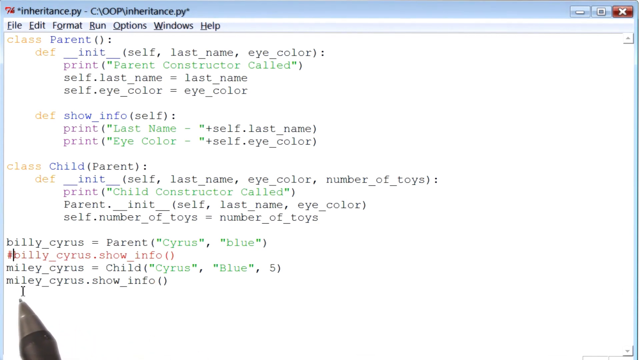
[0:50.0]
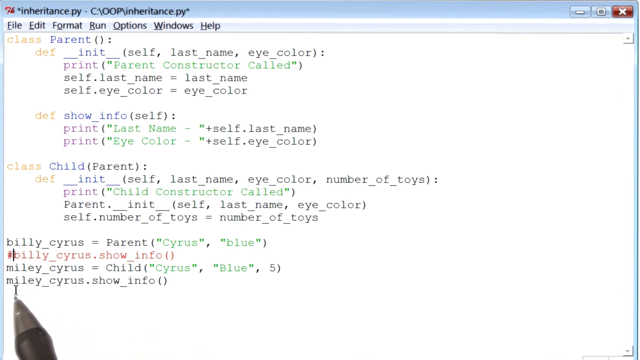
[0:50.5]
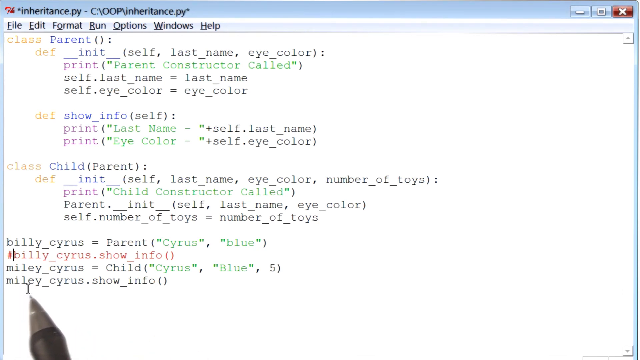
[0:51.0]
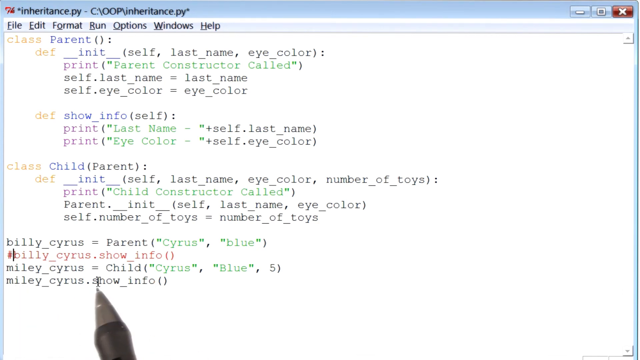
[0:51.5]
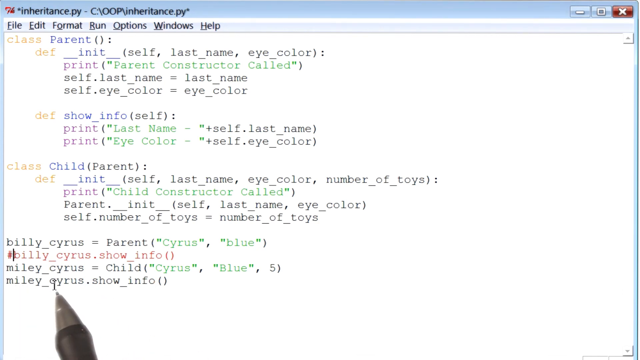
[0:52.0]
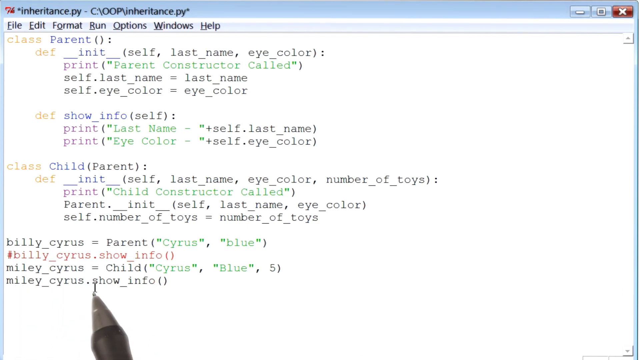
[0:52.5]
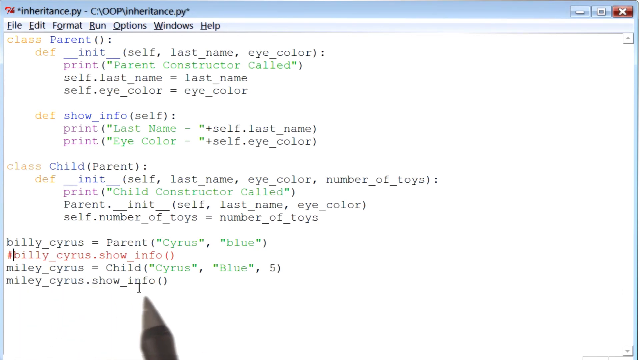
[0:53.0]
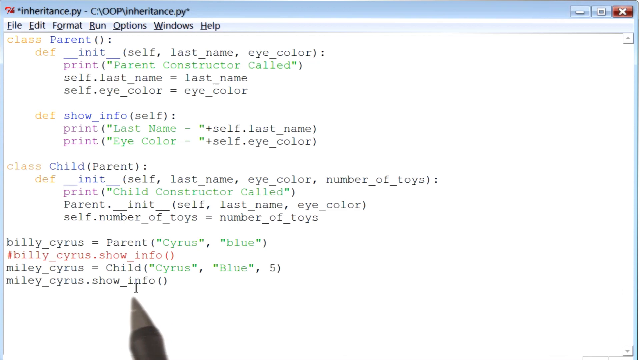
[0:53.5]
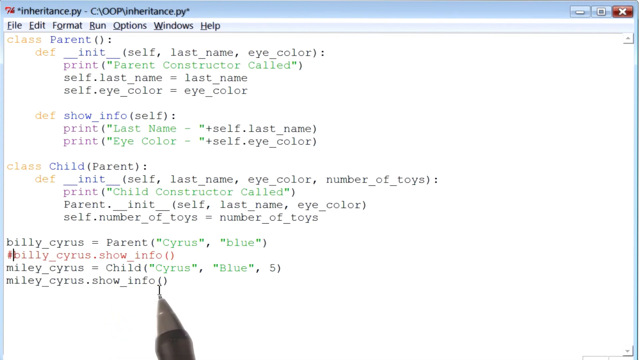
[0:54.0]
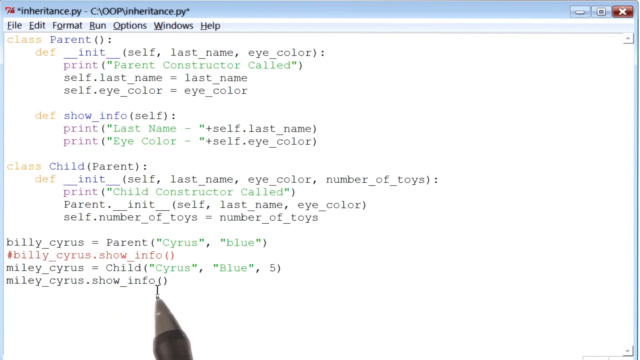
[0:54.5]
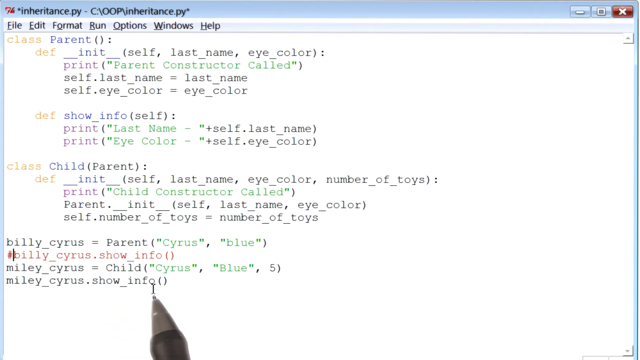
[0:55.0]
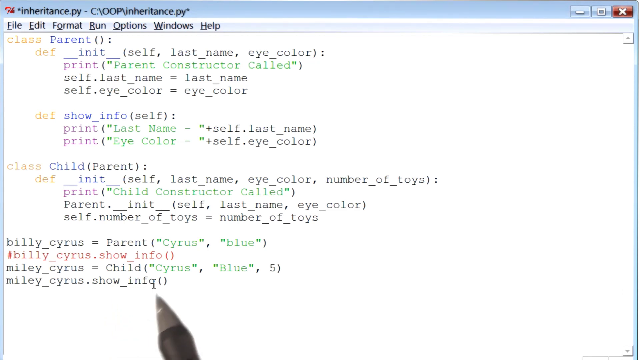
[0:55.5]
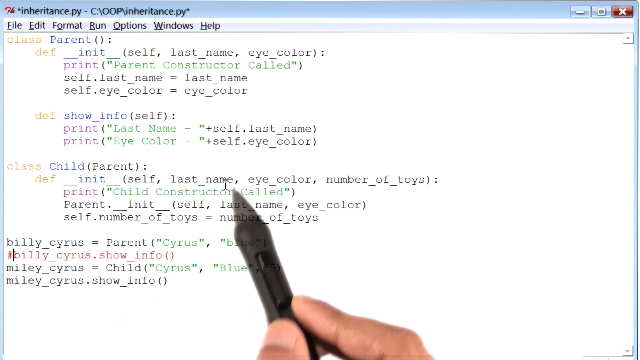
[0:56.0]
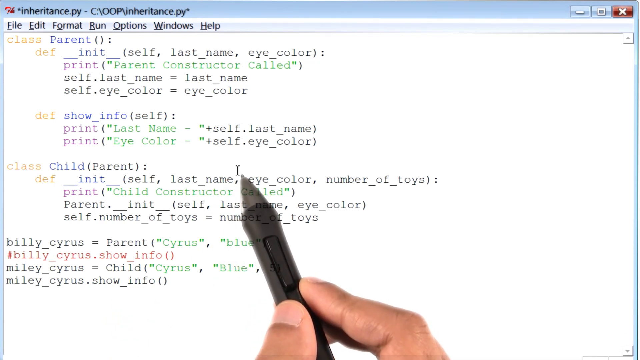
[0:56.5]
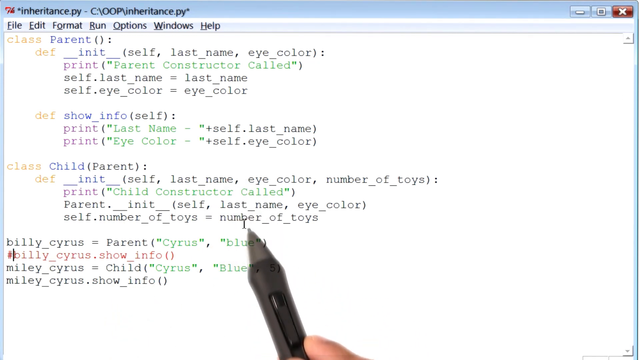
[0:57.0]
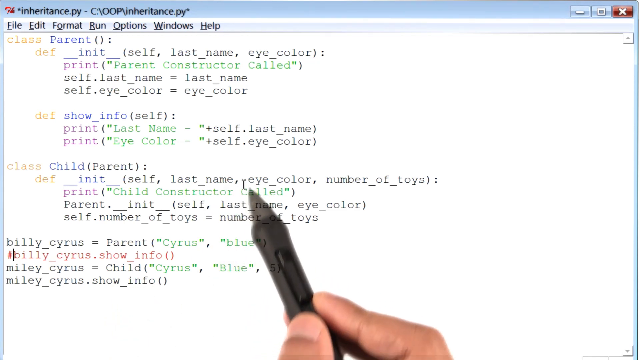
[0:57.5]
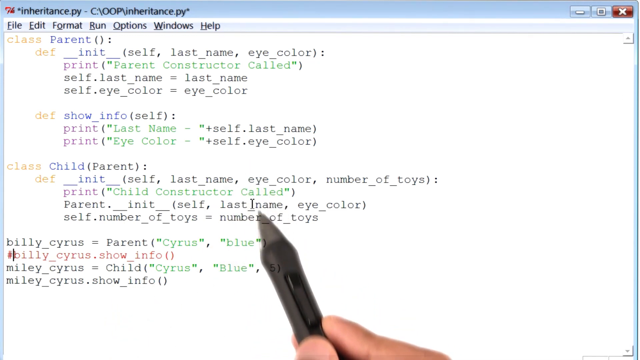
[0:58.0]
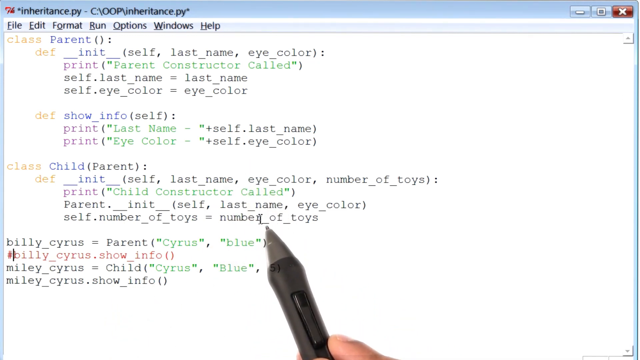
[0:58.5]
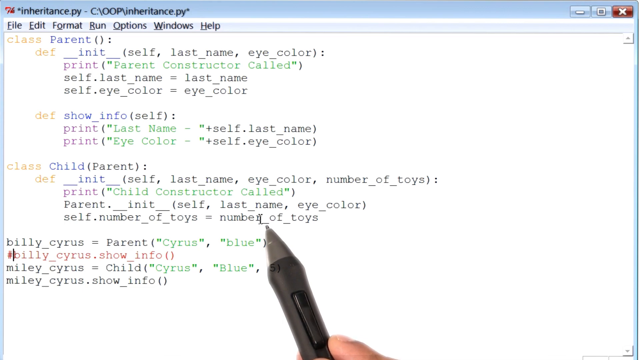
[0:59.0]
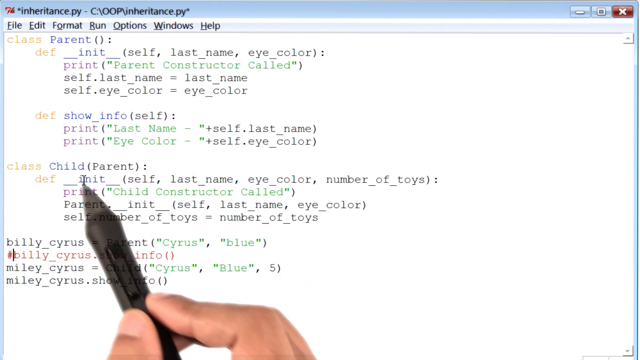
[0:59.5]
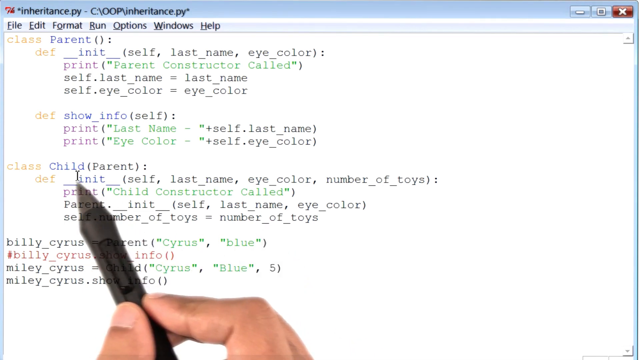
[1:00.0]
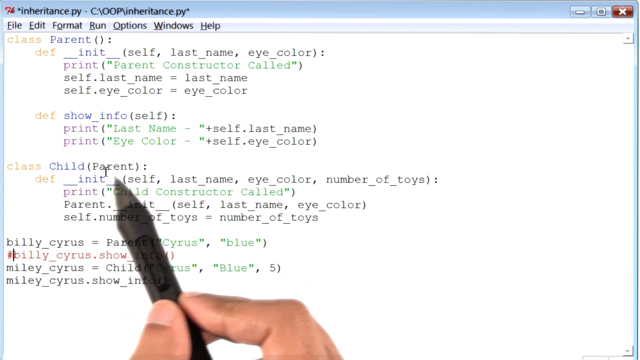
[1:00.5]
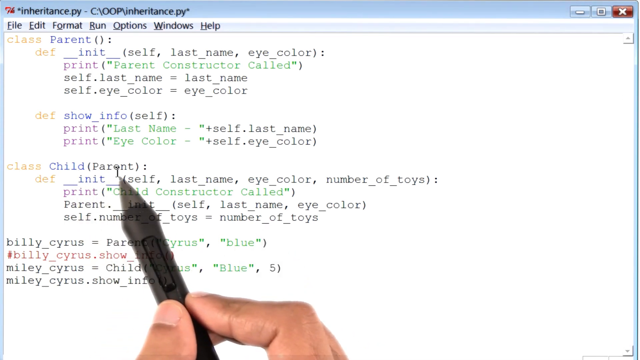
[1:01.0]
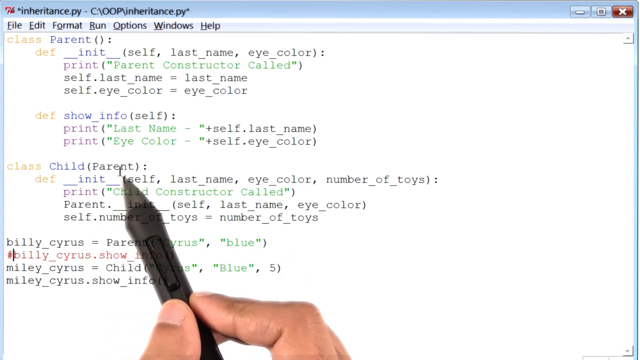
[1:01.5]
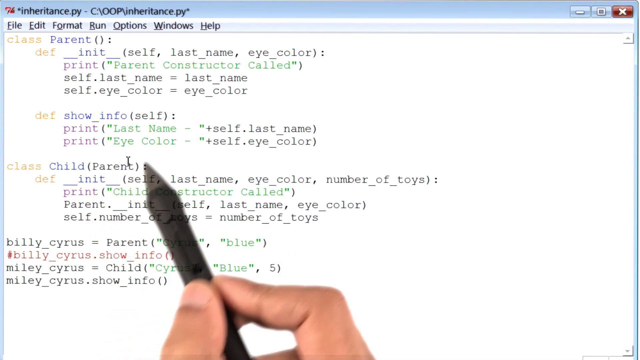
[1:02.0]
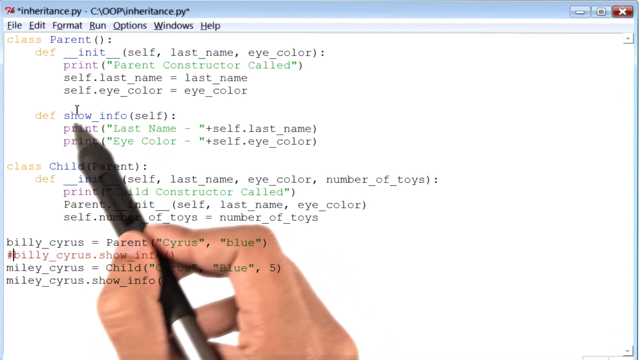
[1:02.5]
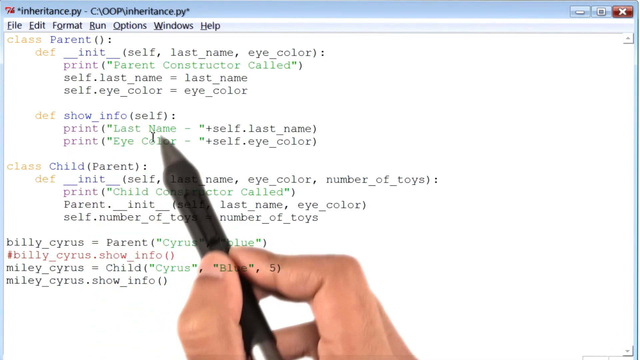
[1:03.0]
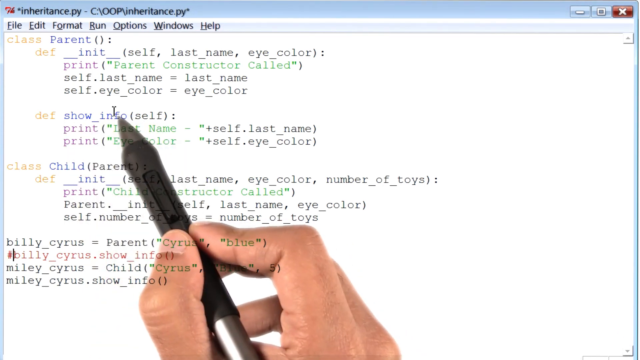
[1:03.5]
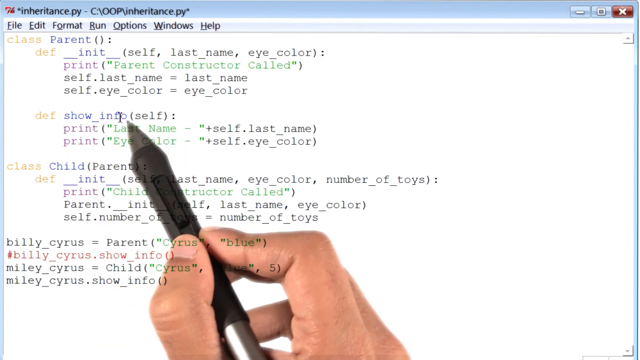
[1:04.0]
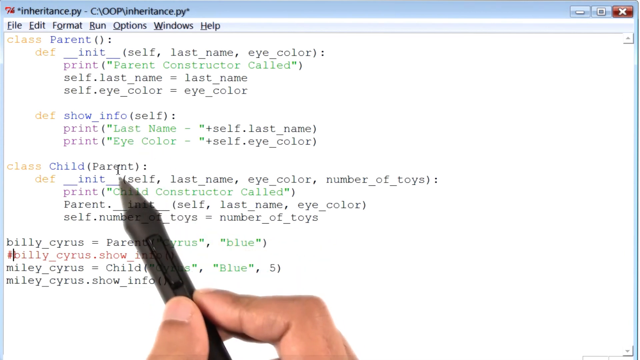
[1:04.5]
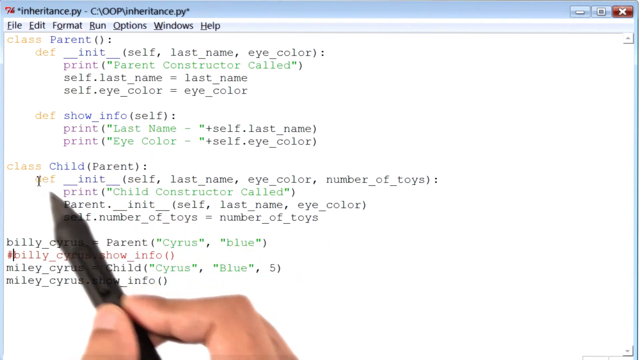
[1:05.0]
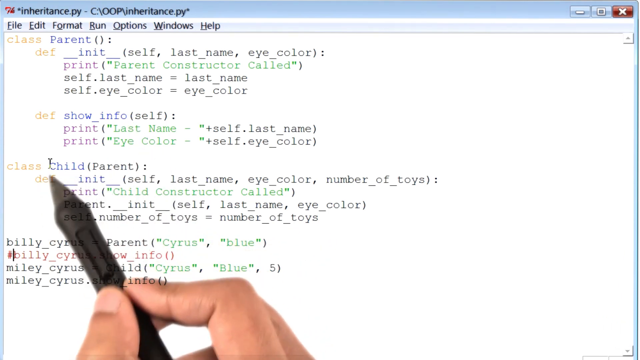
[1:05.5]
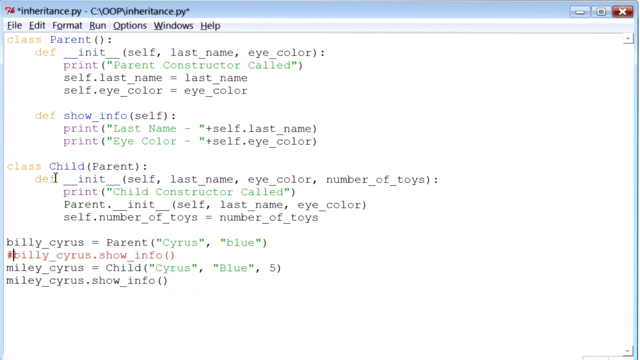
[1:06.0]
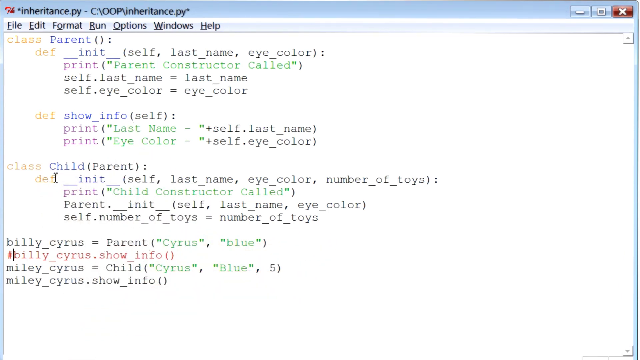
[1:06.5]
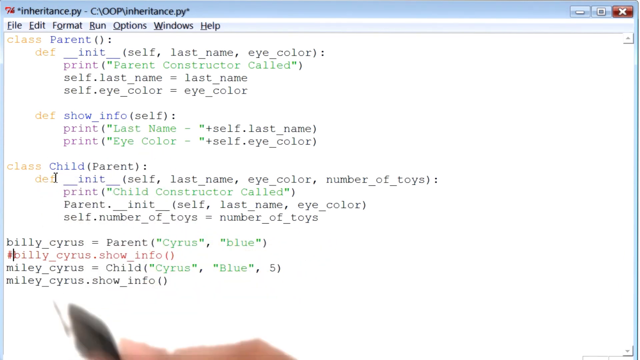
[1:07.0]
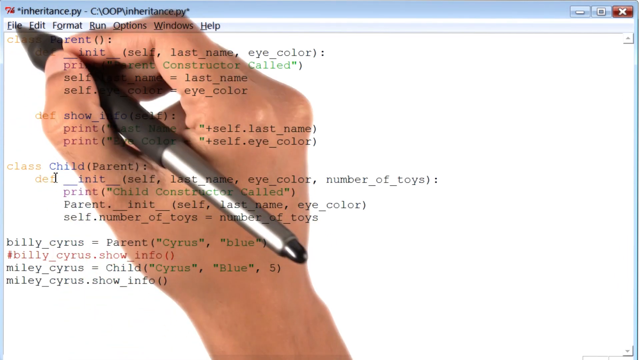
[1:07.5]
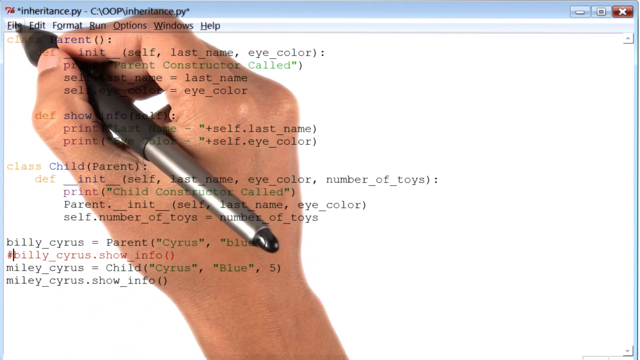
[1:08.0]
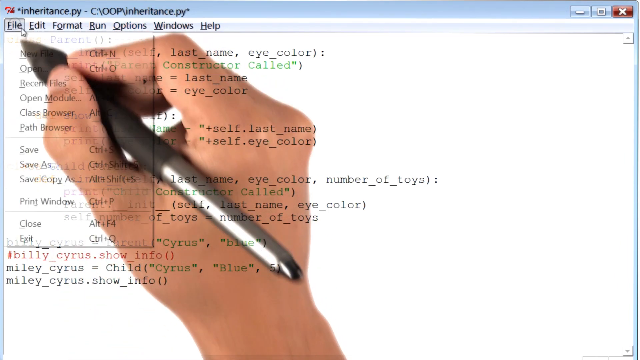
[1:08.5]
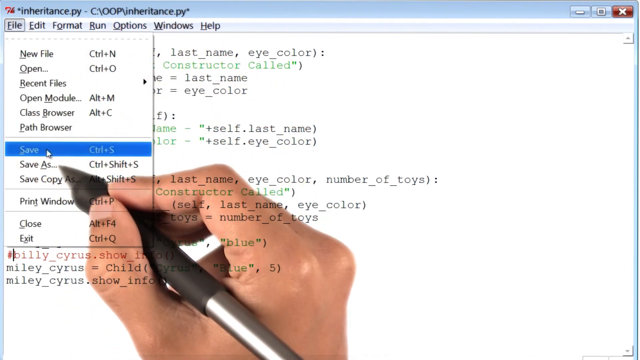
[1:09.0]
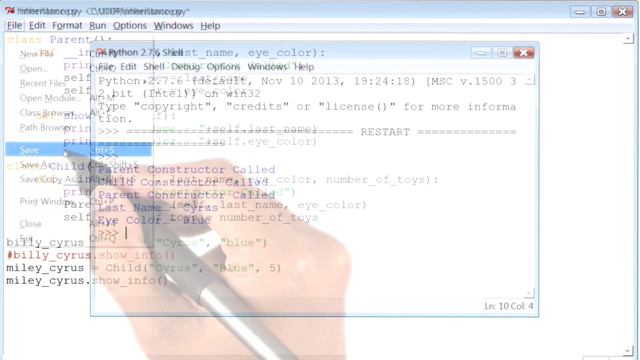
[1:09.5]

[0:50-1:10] The video demonstrates how to code. The document looks like a Word document, with "inheritance.py" at the top and a menu reading file, edit, format, run, options, window and help. The code includes the class parent with self, last name and eye color, followed by more lines, show info, and then child(parent) with self, last name and eye color. Underneath are a couple of examples: Billy Cyrus as parent and Miley Cyrus as child. A hand pops out holding something like a stylus and circles things. The stylus is black with a little clicking-type button on the side; a large part of its top is silver, while the very end is black. It points to file, and a drop-down menu with Python appears.